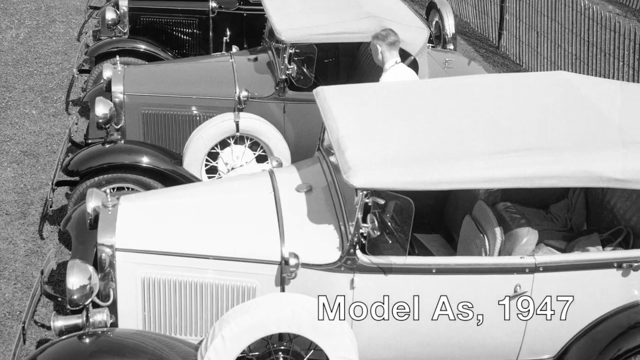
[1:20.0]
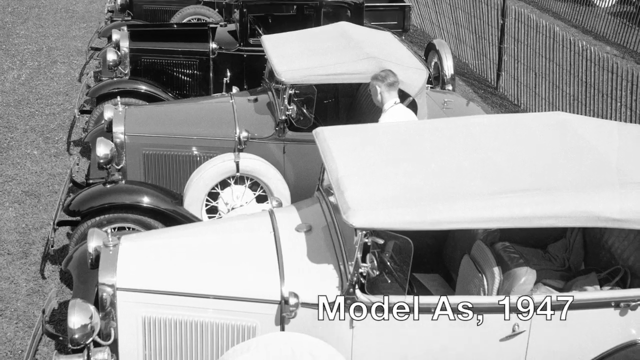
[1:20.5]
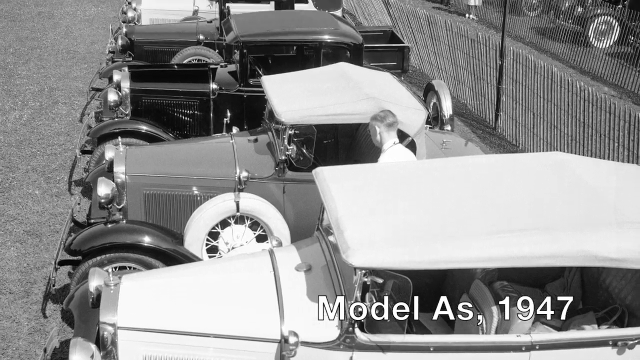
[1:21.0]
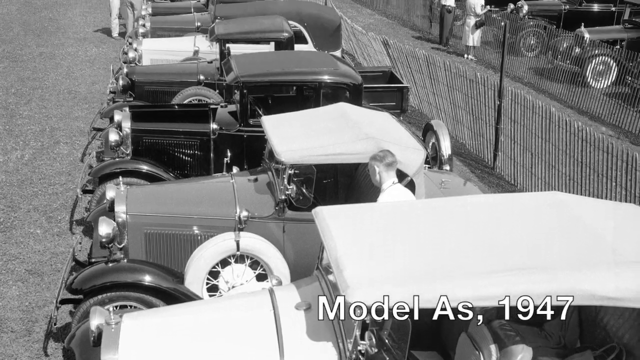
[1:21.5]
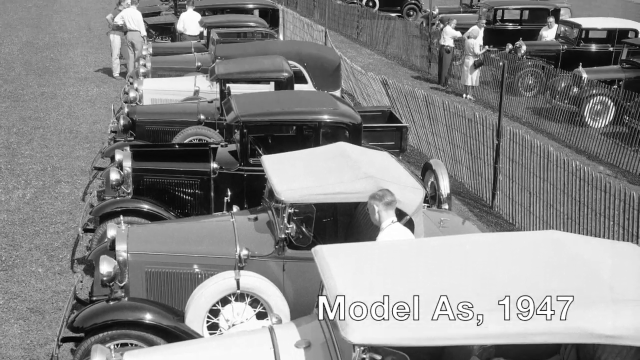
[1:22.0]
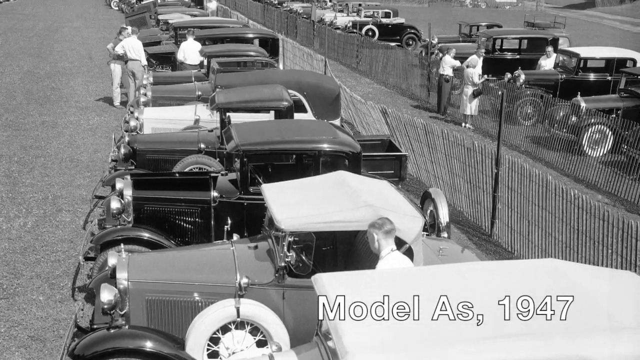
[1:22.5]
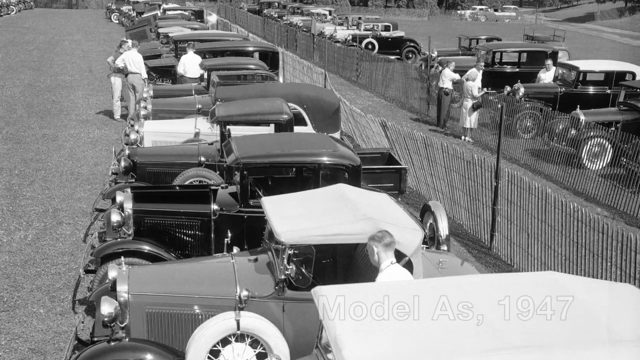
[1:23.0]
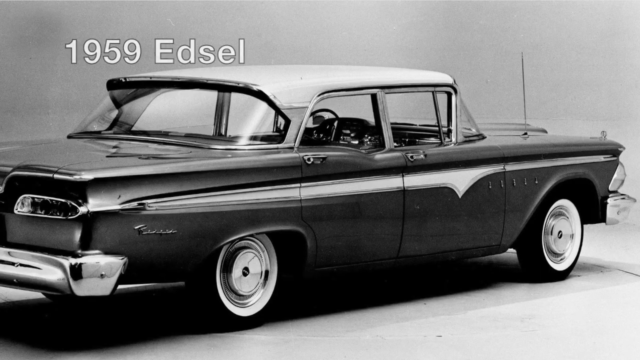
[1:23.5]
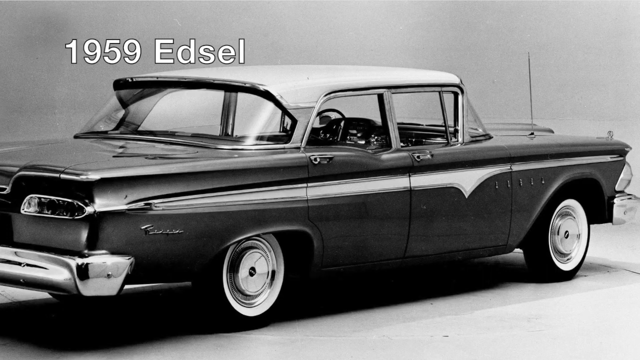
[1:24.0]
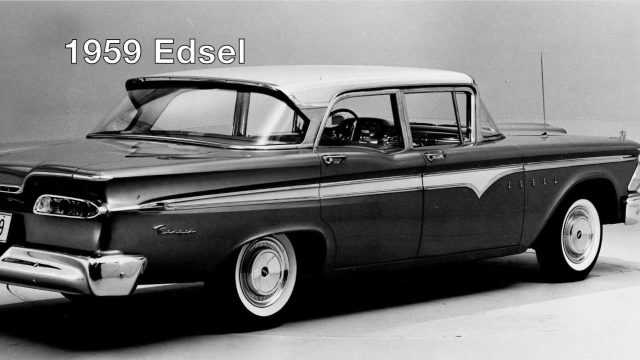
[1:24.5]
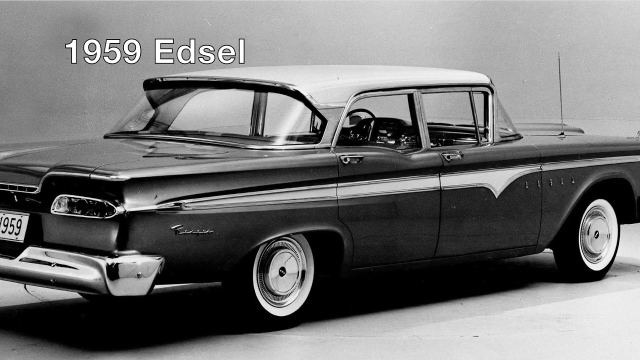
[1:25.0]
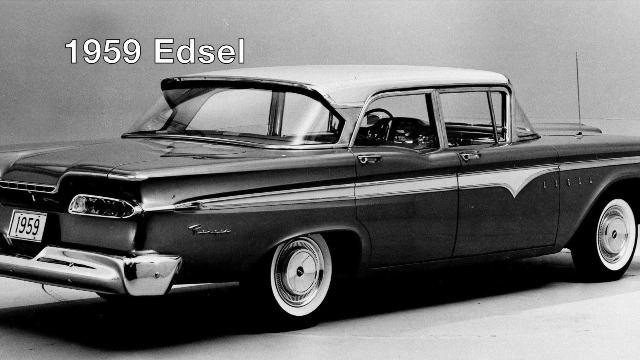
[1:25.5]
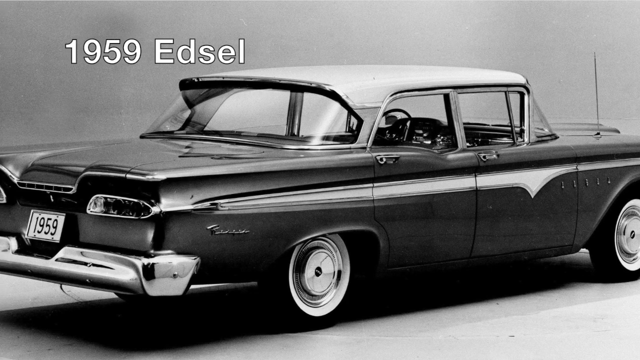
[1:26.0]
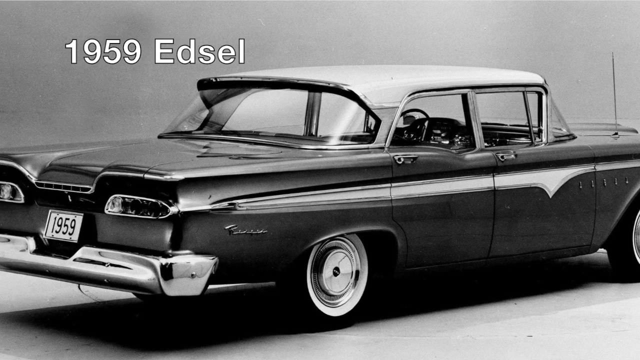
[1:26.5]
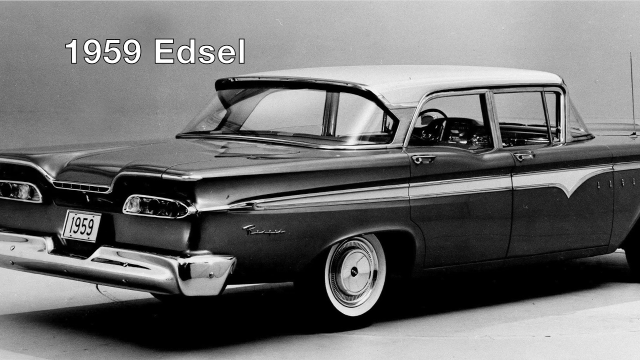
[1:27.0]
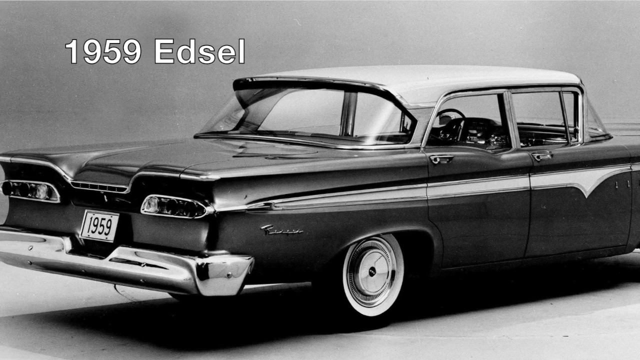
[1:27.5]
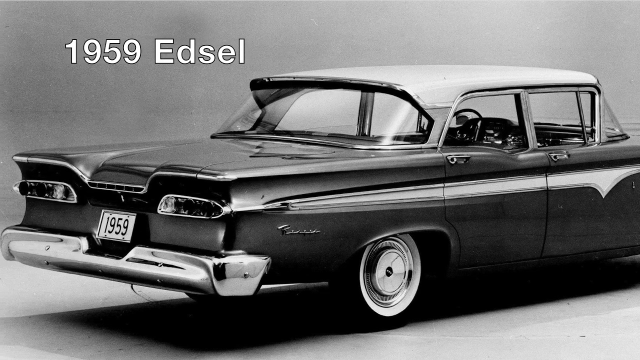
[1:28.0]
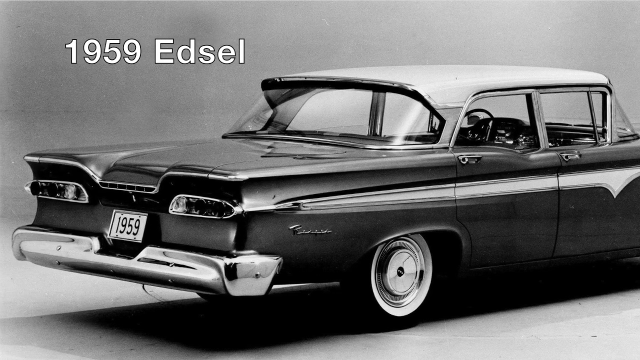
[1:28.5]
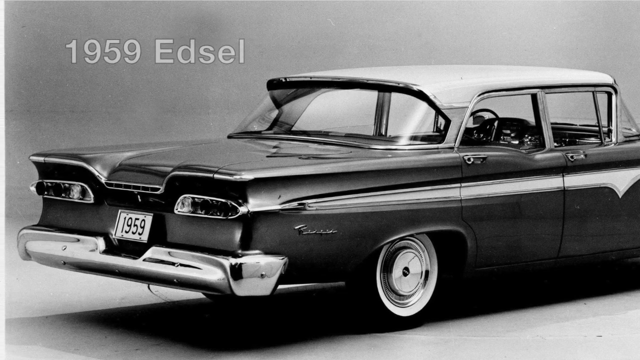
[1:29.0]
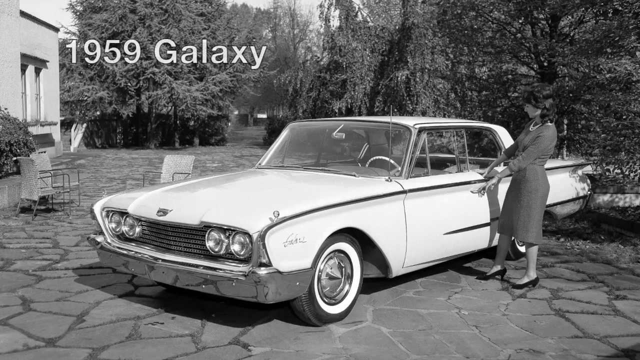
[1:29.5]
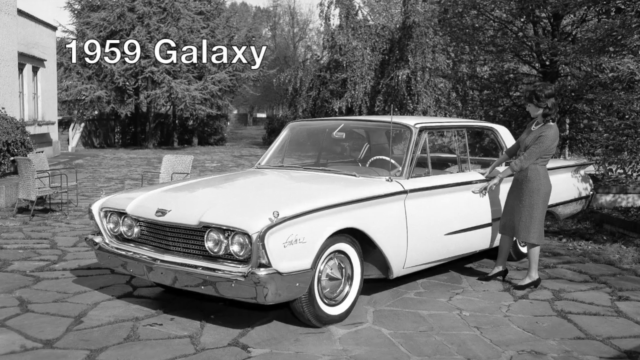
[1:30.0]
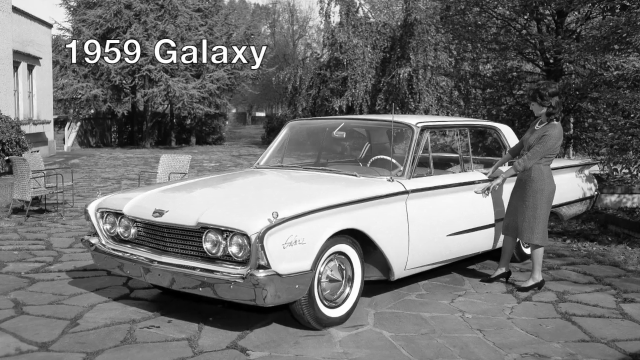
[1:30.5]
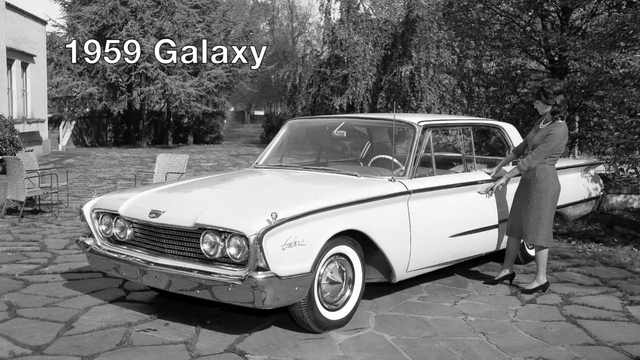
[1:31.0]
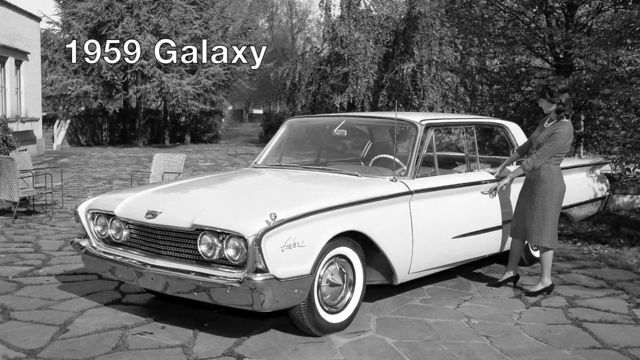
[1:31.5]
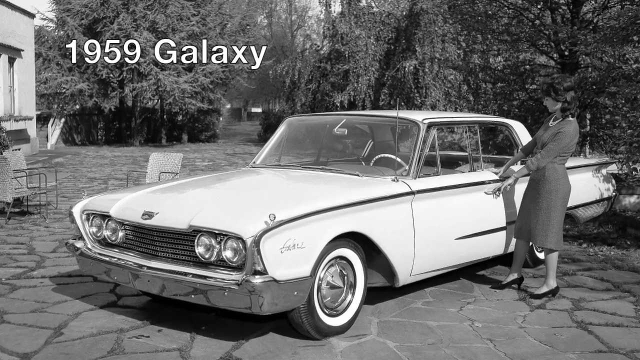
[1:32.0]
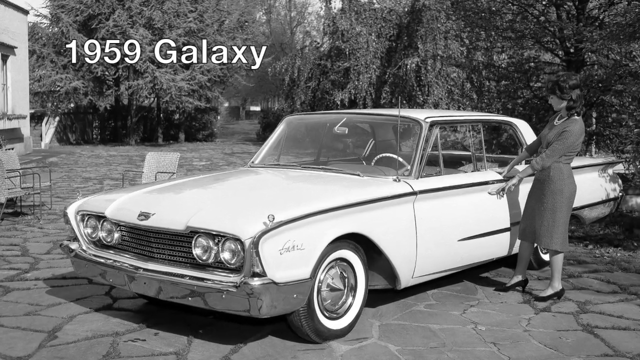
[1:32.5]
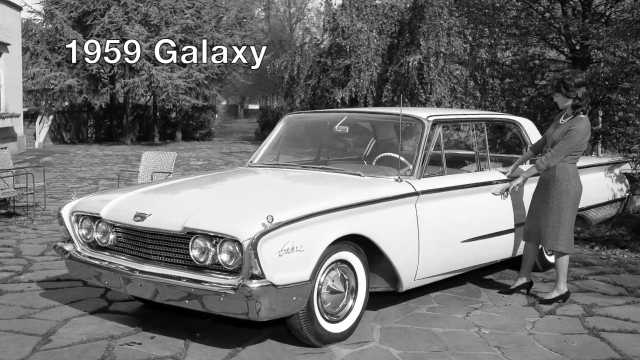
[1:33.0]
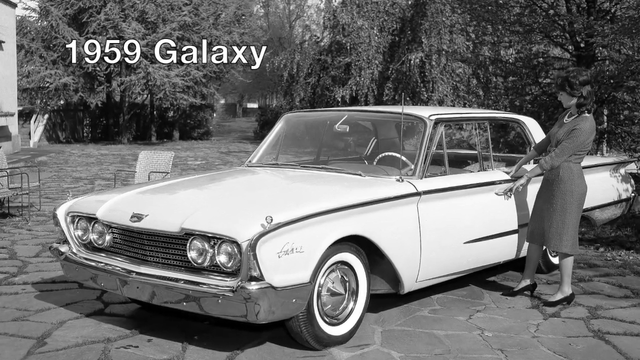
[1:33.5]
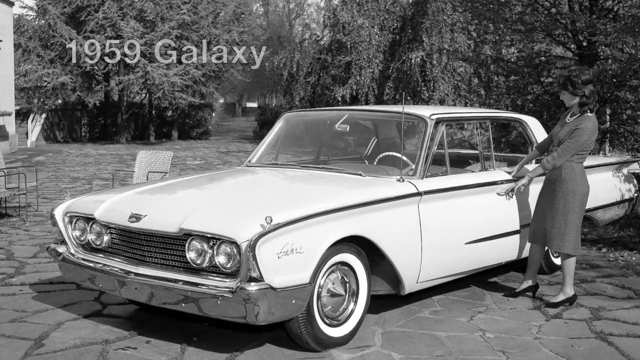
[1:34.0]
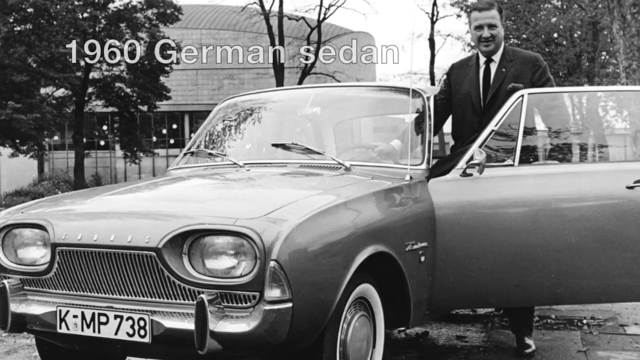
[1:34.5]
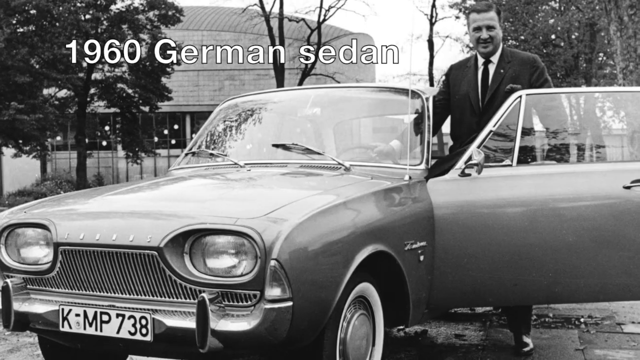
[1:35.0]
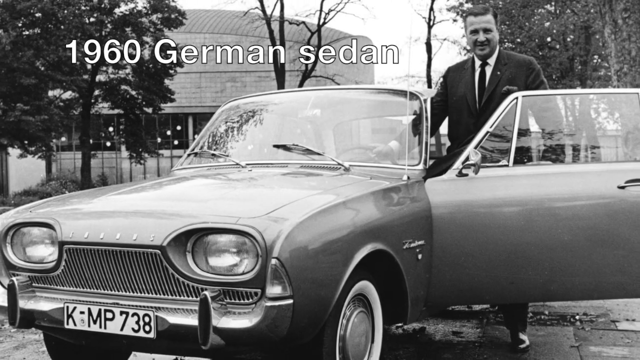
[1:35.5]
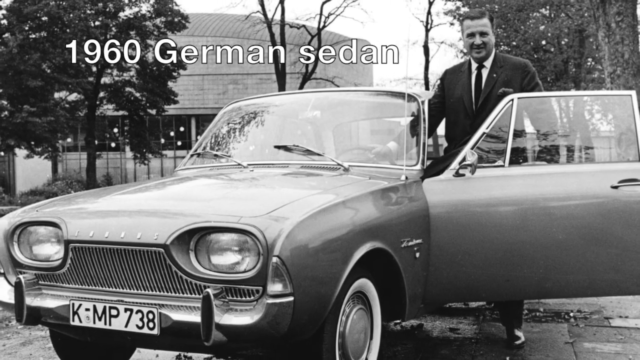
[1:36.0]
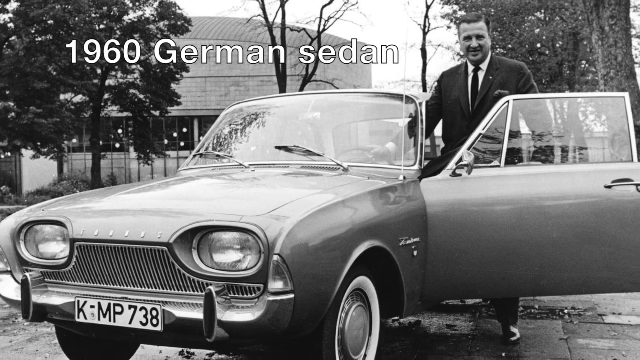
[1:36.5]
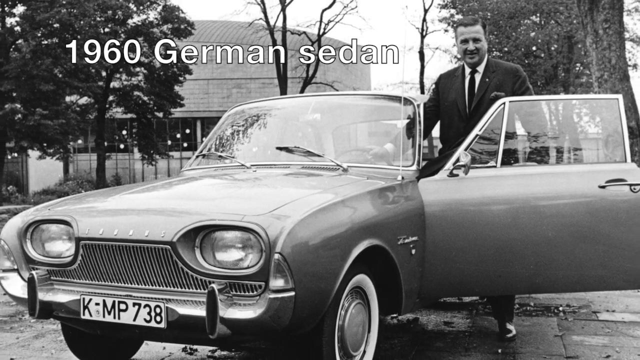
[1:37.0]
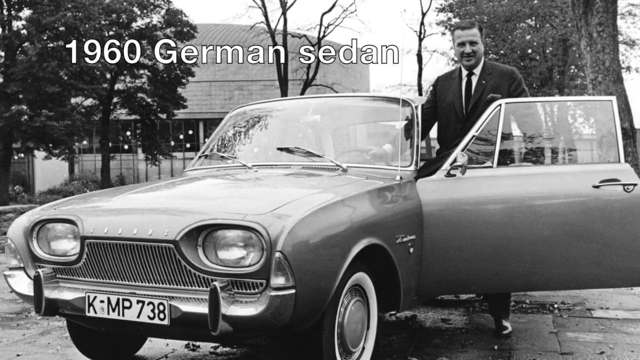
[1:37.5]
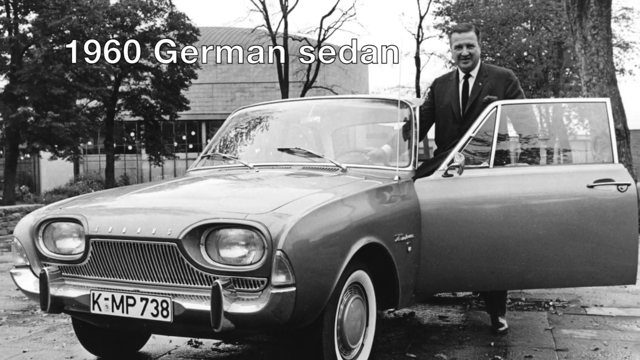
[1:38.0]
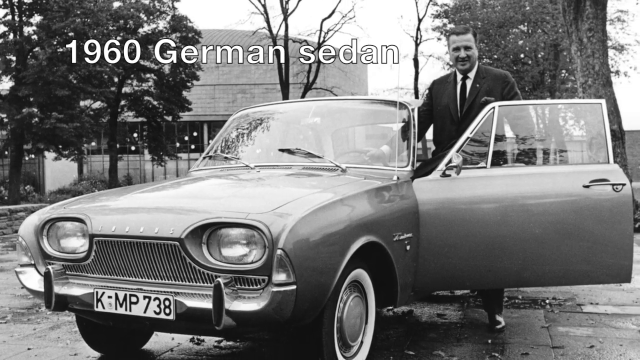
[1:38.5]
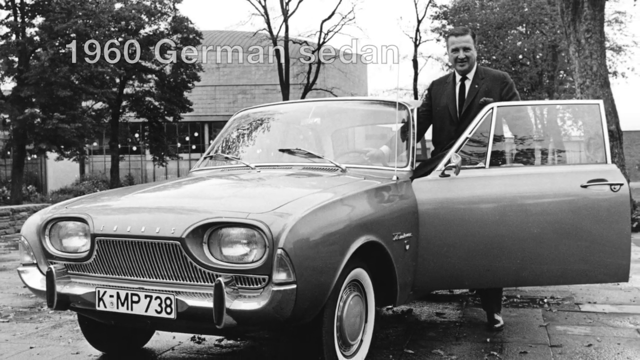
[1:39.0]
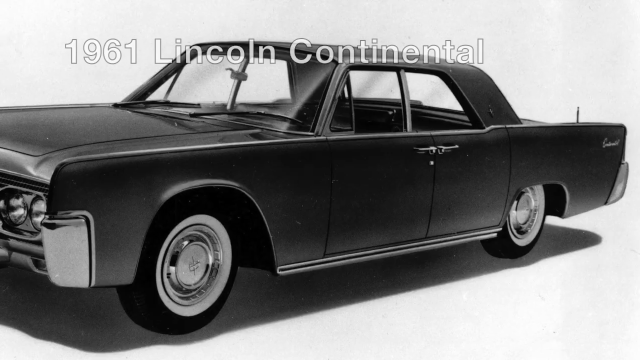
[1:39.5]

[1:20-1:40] The video moves between images of different vehicles. It begins with a row of Ford Model As circa 1947 in various sizes, designs and features. Next come the 1959 Edsel with its wing-finned rear and wraparound rear window, the 1959 Galaxy, whose body design looks part spaceship, a small, compact 1960 German sedan, and a very sizable 1961 Lincoln Continental. The Lincoln has very flat vertical sides and is a very massive vehicle.